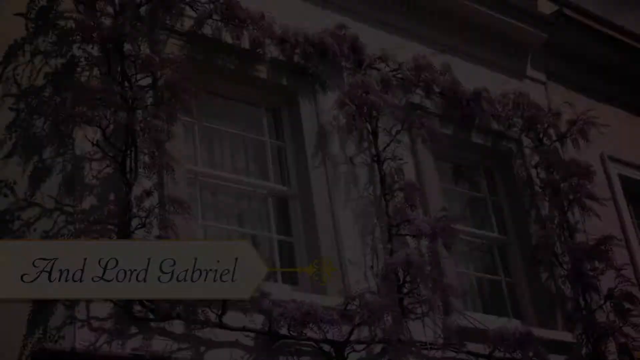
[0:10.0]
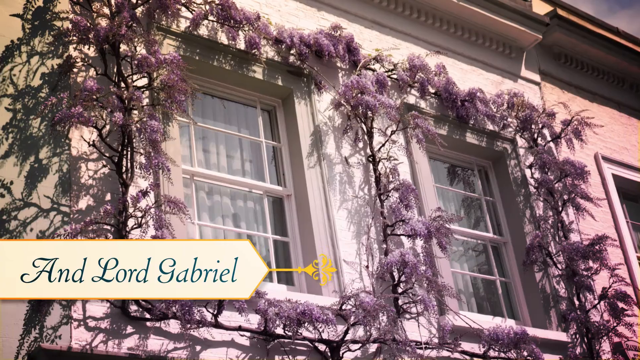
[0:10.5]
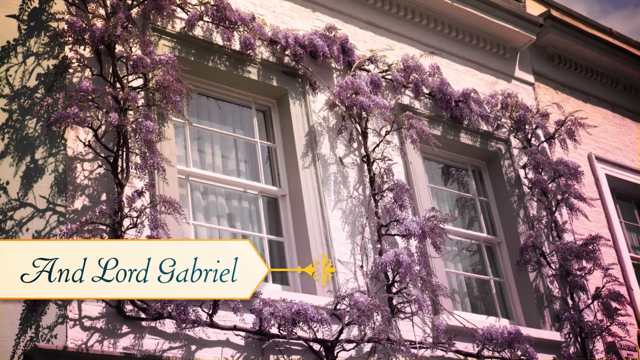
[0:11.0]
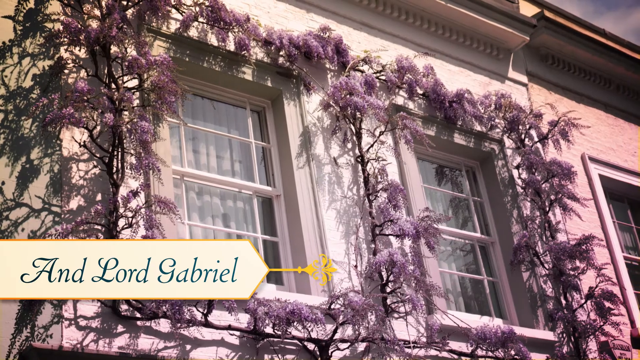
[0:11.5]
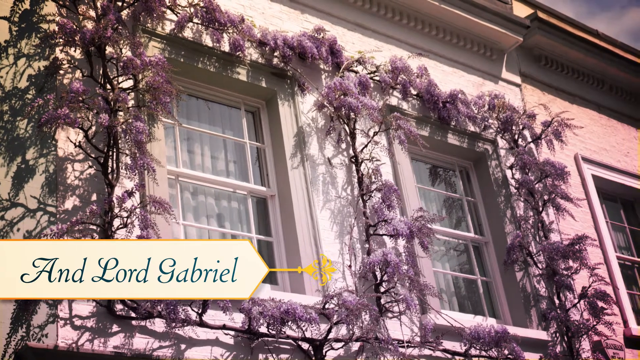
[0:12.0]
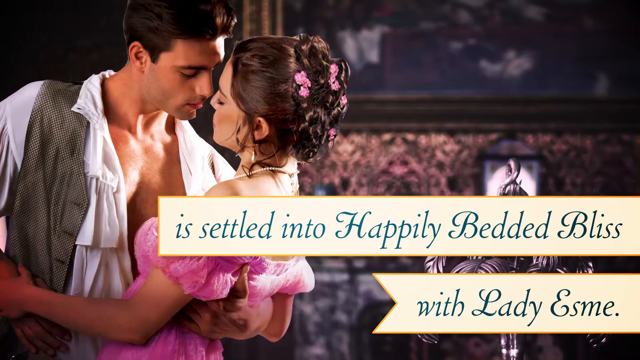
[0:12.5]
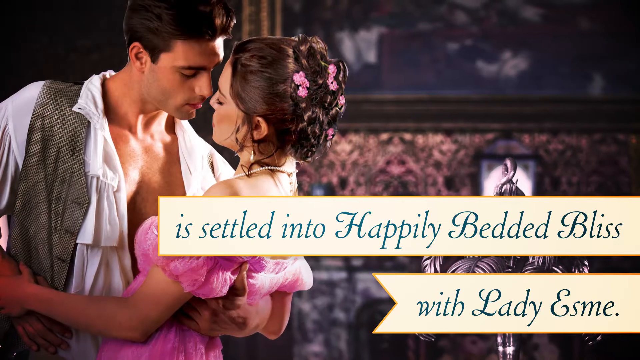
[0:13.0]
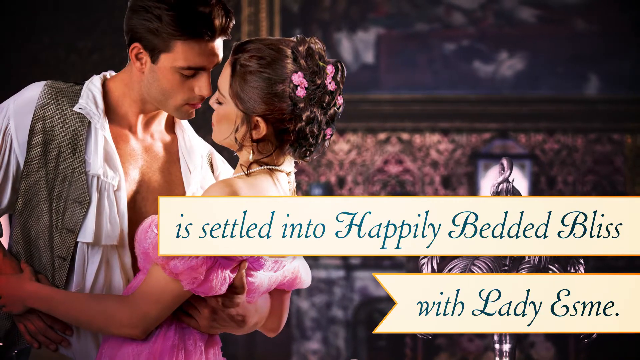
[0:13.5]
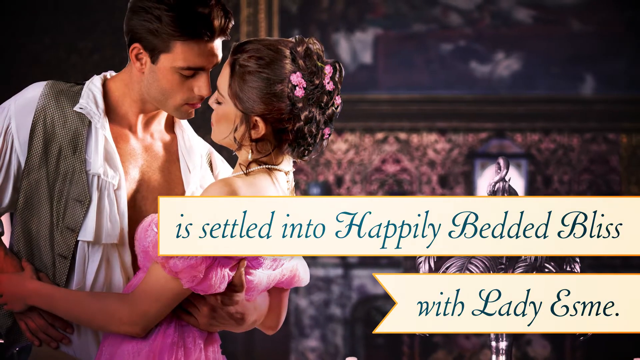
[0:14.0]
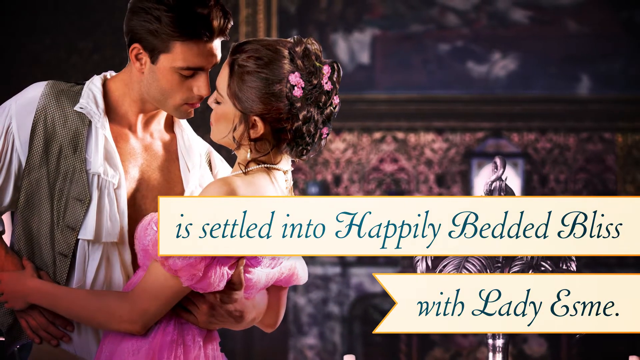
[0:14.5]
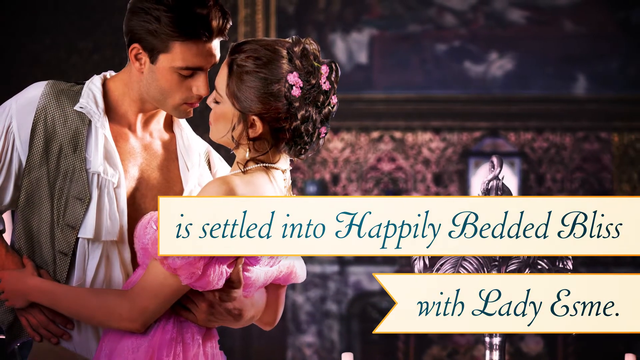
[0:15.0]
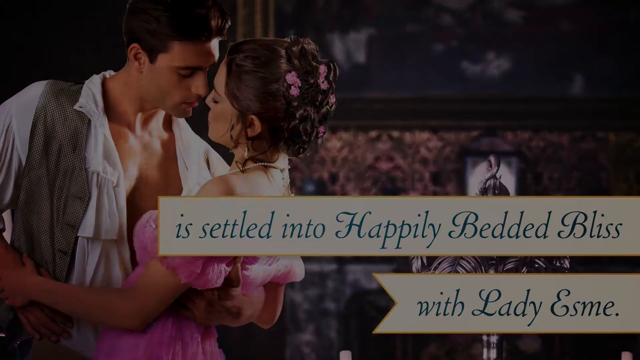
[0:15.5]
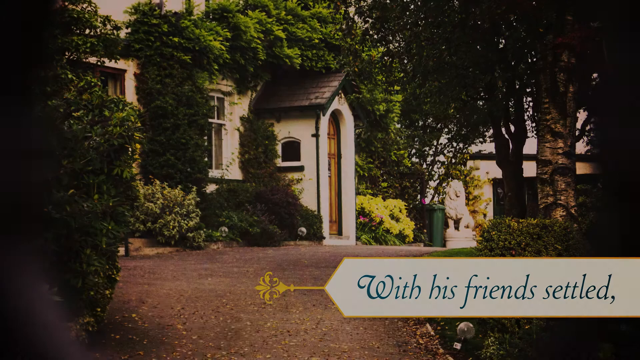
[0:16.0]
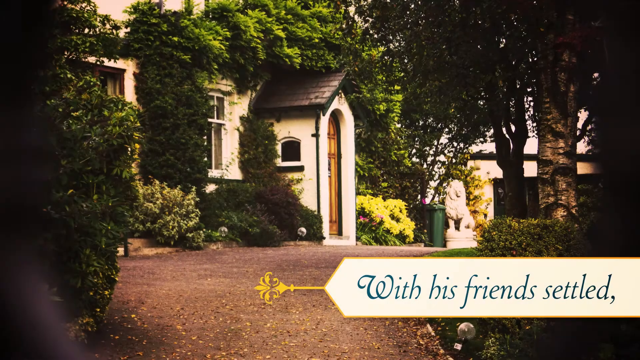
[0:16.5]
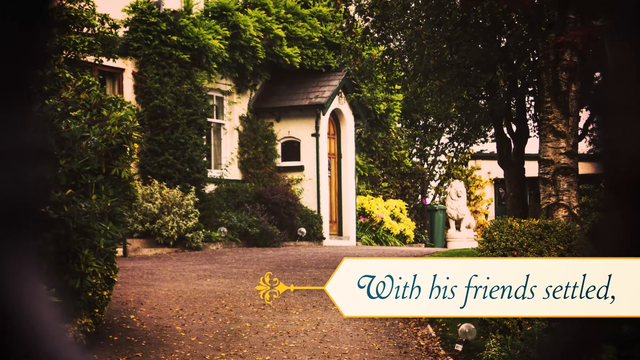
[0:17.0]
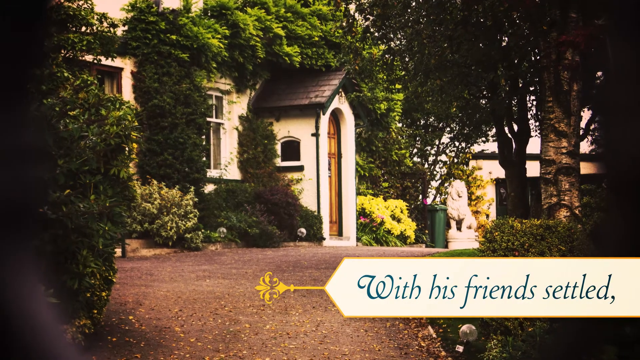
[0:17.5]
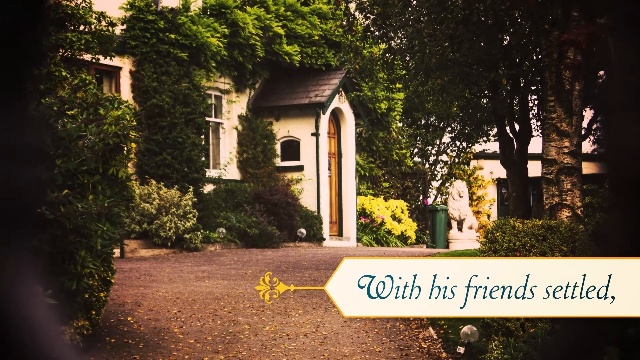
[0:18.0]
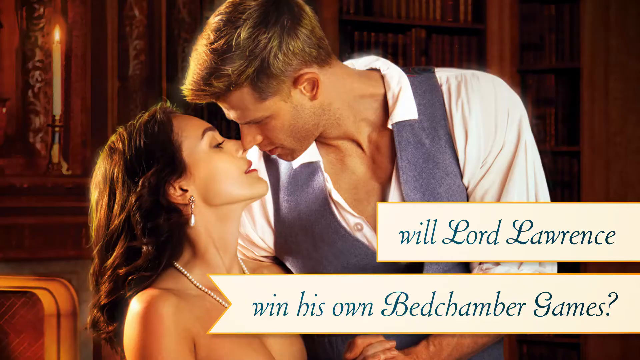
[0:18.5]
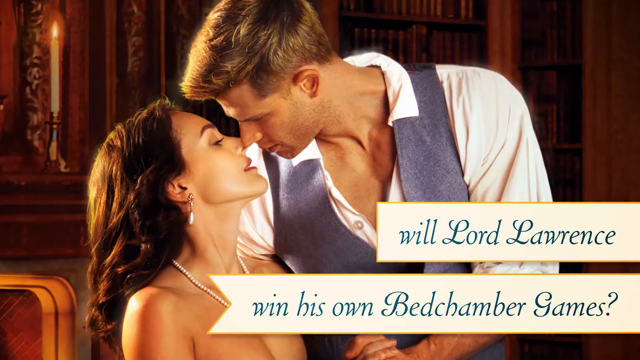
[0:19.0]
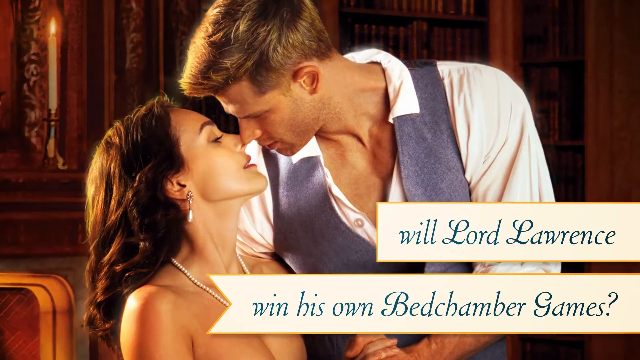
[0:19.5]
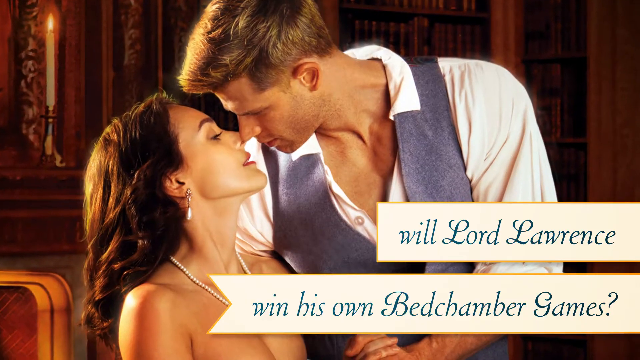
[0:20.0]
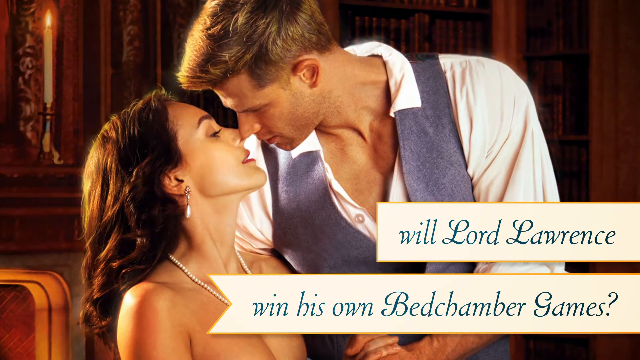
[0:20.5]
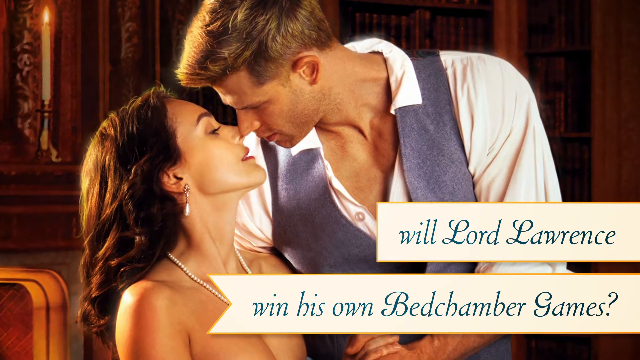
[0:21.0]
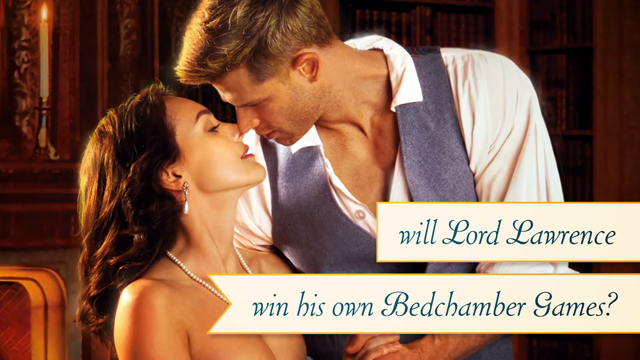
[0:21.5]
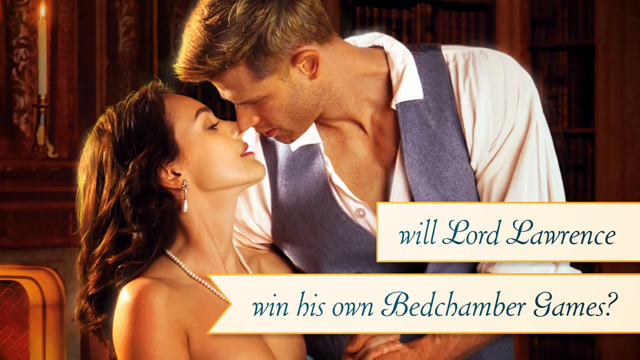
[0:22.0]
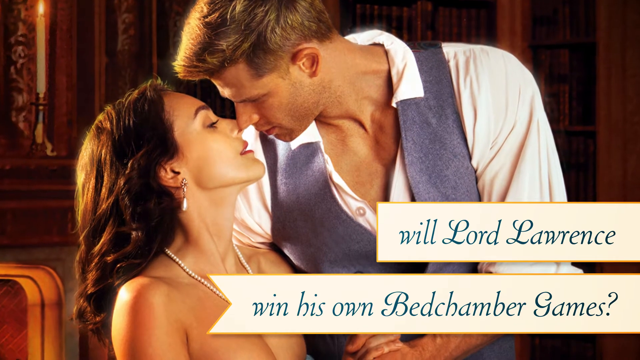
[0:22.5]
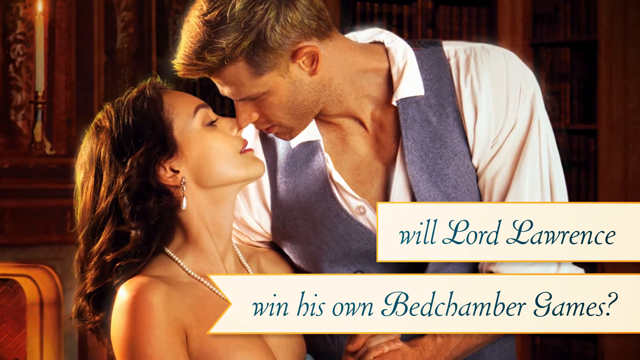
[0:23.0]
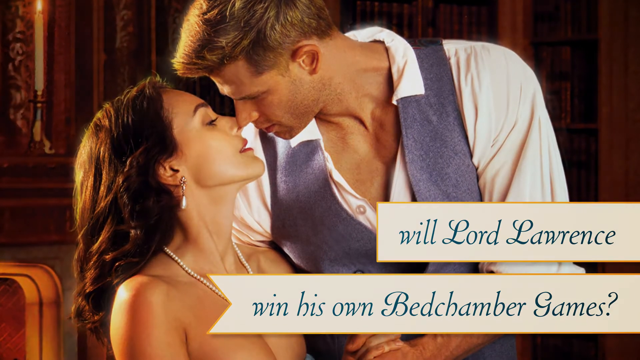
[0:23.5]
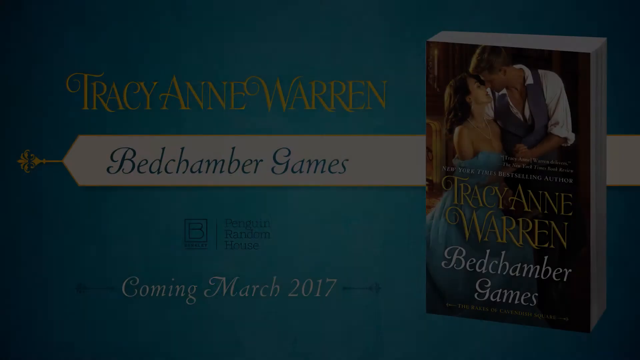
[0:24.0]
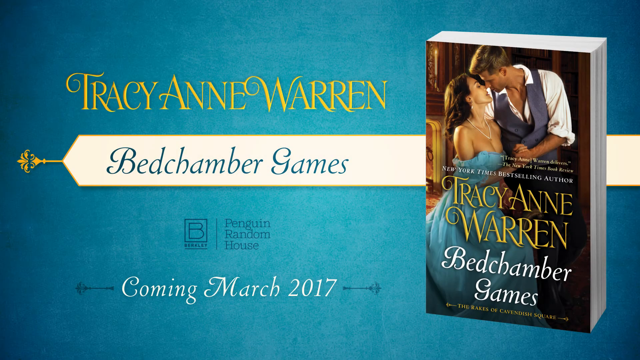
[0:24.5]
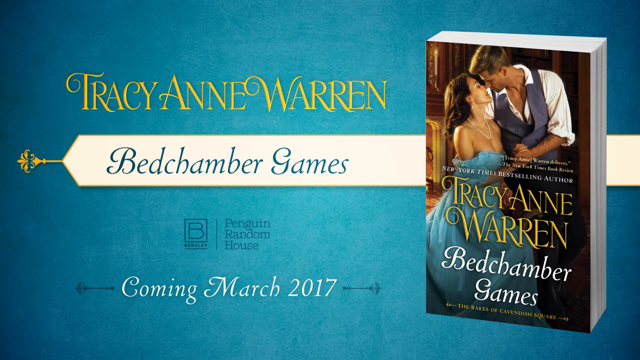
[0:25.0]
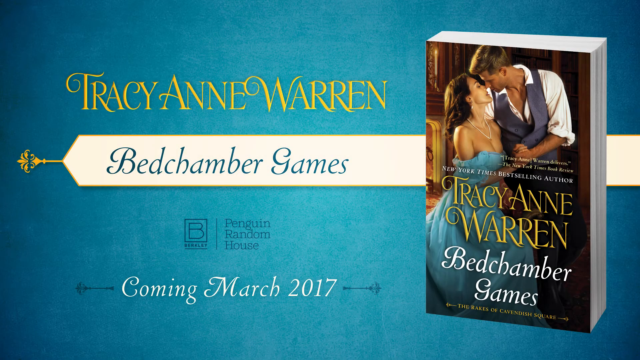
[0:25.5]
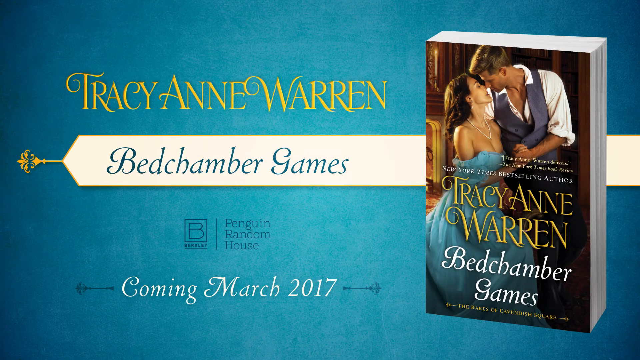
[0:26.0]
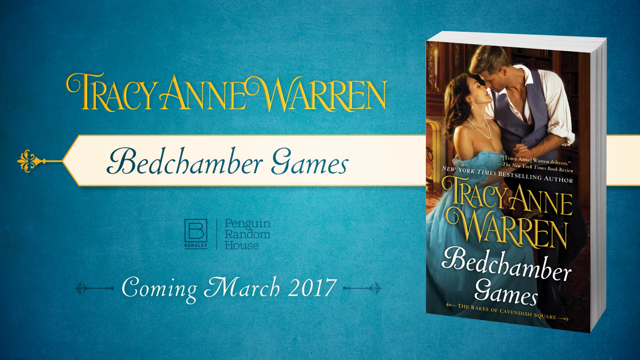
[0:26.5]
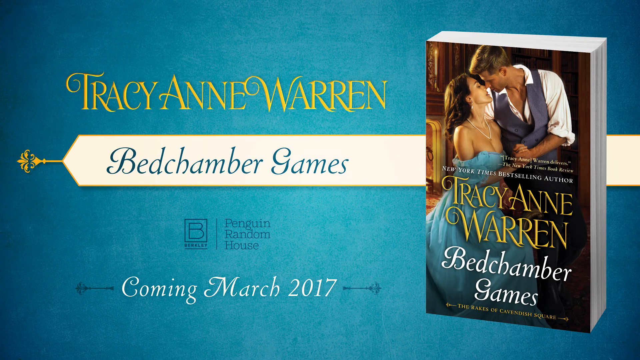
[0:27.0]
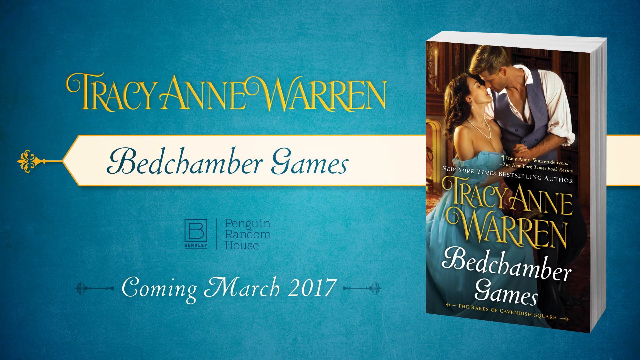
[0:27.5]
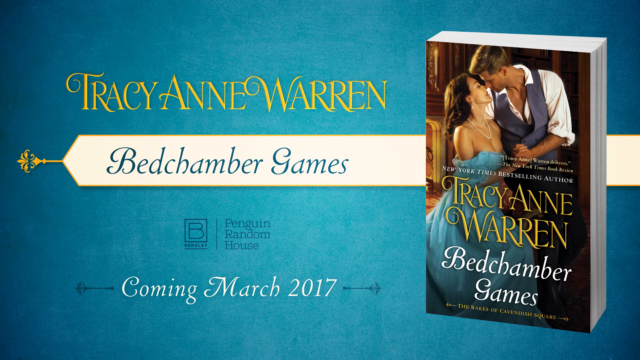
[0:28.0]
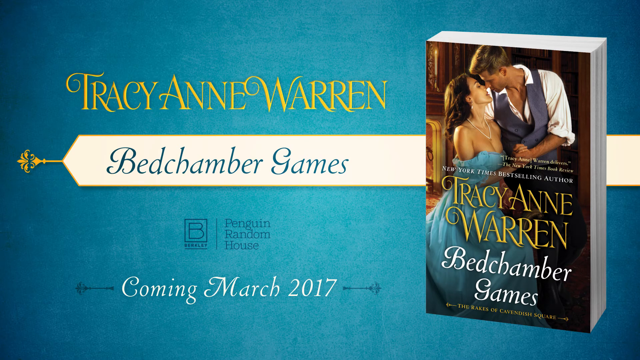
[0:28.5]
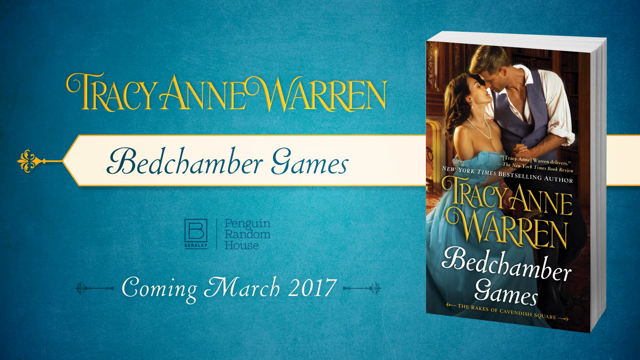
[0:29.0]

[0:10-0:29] The name "Lord Gabrielle" appears, along with an image of a man and a woman who seem to be either about to kiss or dancing fondly. Another man and woman are shown, as well as another location. Several images have text over them, including "Lord Lawrence and his Bedchamber Games." At the end, a book resolves: Bedchamber Games by Tracy Anne Warren, seemingly a romance book coming out in March of 2017 from Penguin Random House, so the video appears to be a promotion for the book or possibly a book series. The book is shown on a blue background with gold highlights that match the lady's dress on the cover. The cover shows a very tanned woman wearing a necklace, together with Lord Leo in his plunging neckline.